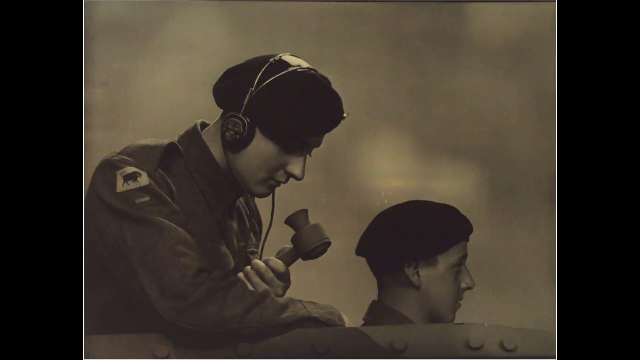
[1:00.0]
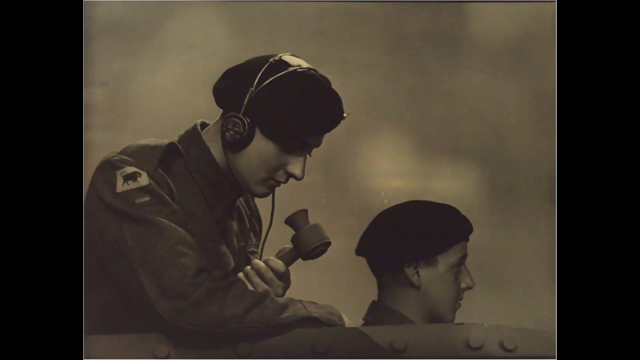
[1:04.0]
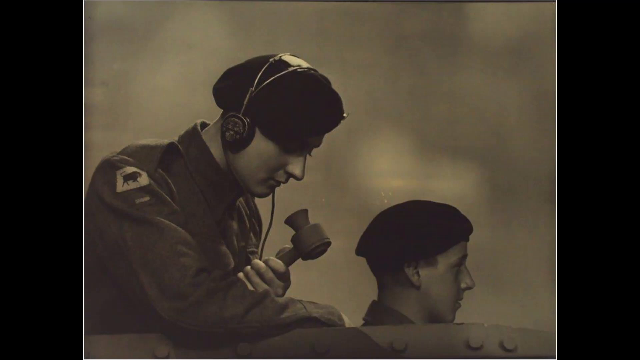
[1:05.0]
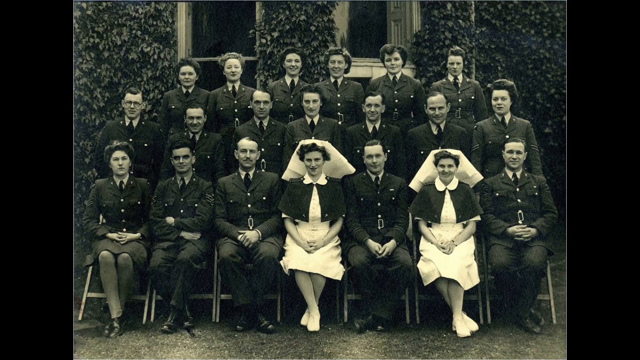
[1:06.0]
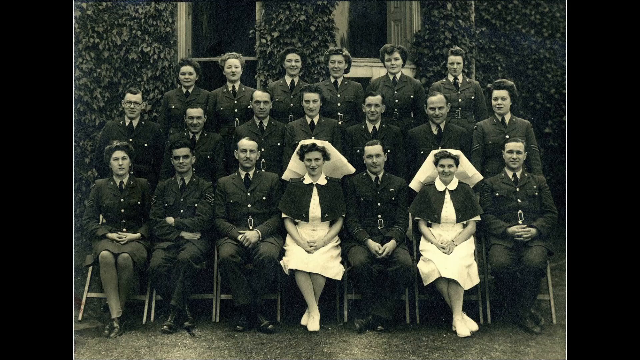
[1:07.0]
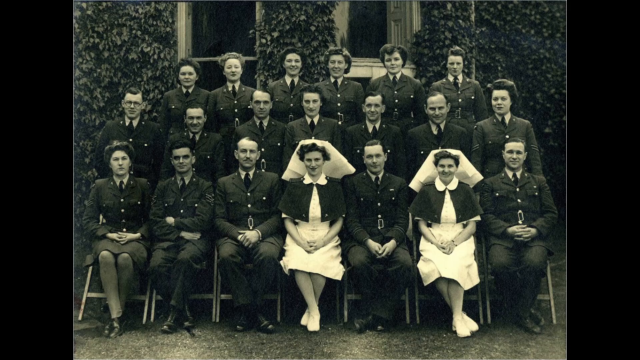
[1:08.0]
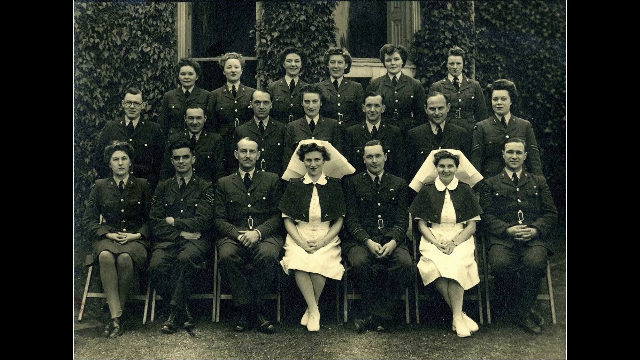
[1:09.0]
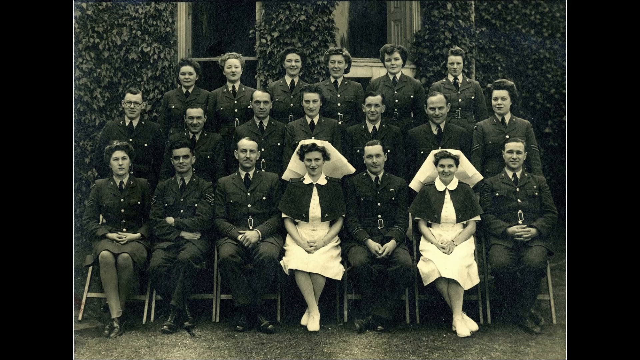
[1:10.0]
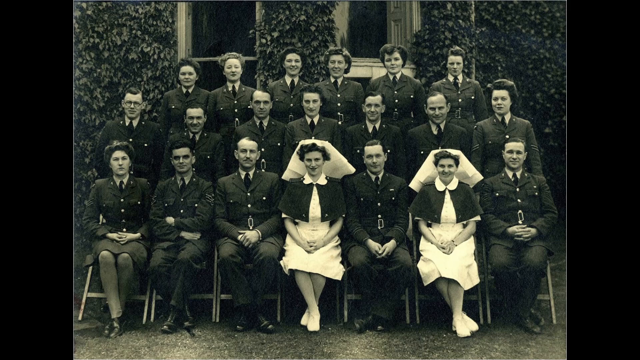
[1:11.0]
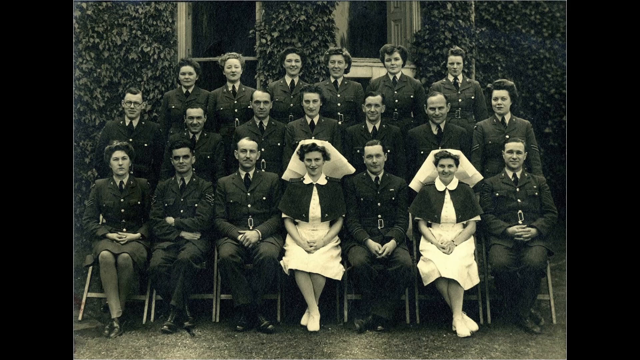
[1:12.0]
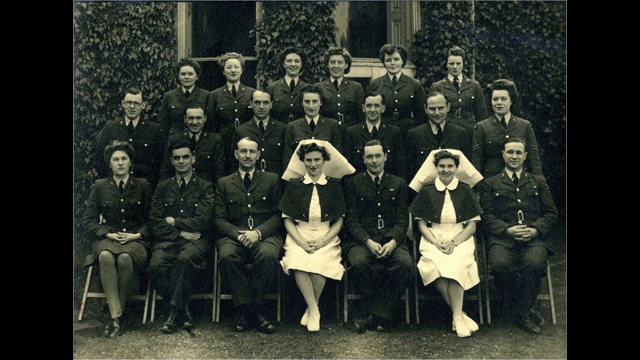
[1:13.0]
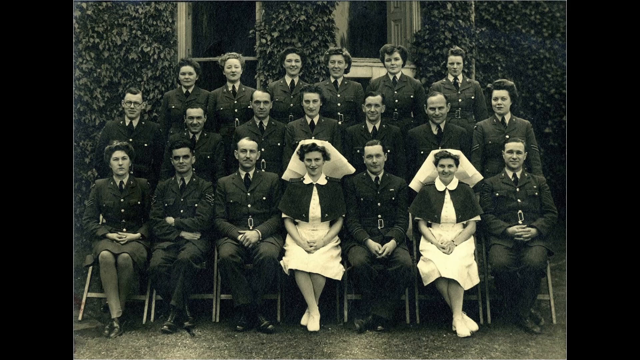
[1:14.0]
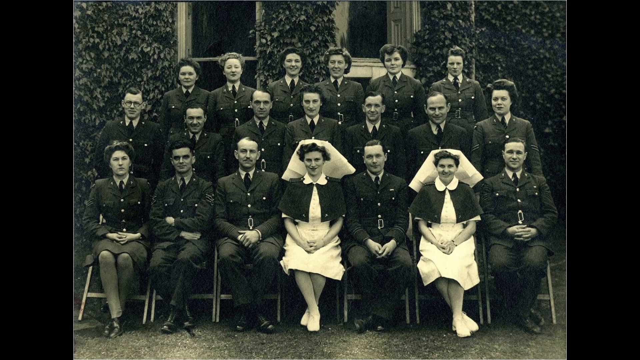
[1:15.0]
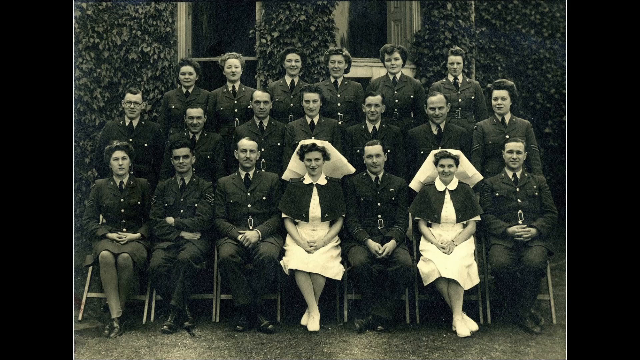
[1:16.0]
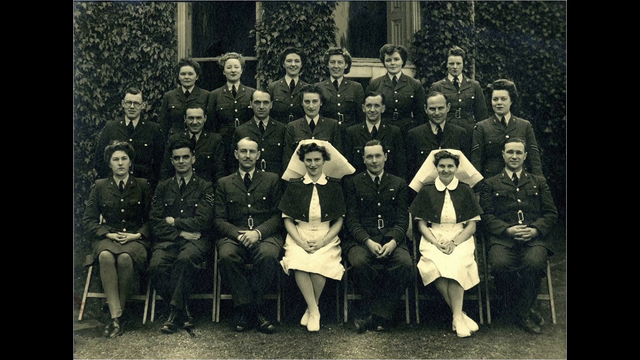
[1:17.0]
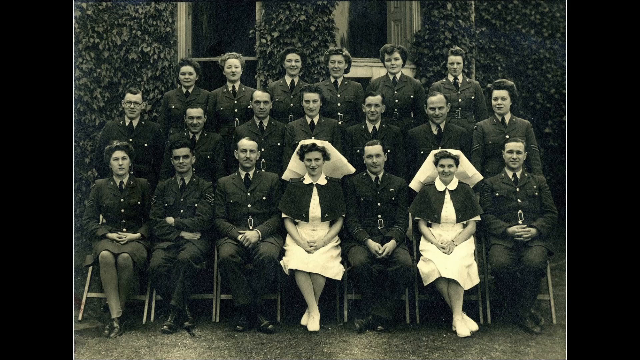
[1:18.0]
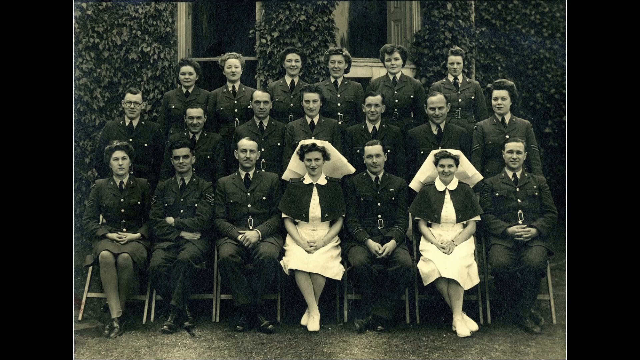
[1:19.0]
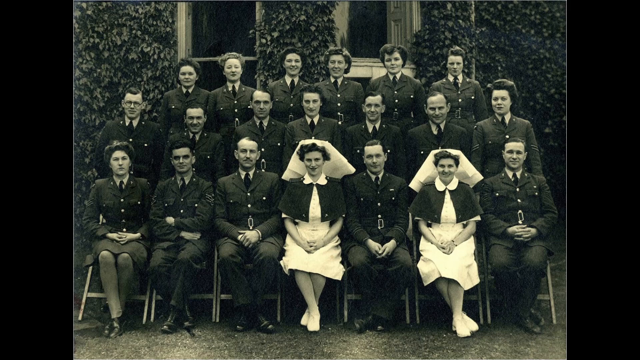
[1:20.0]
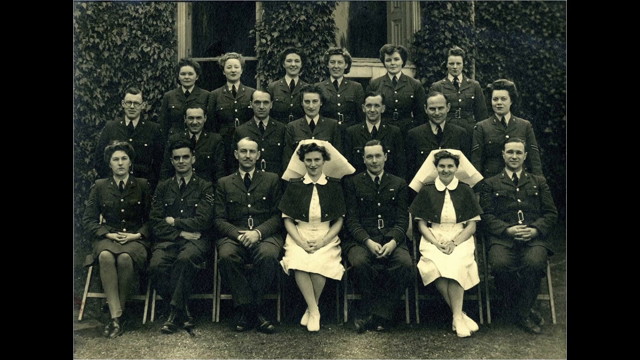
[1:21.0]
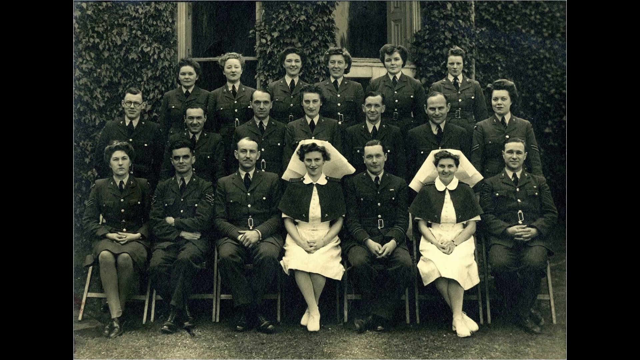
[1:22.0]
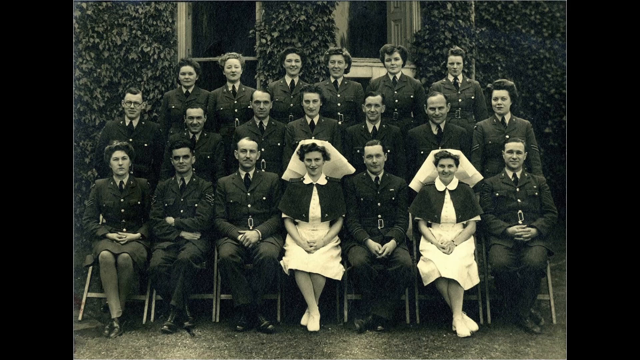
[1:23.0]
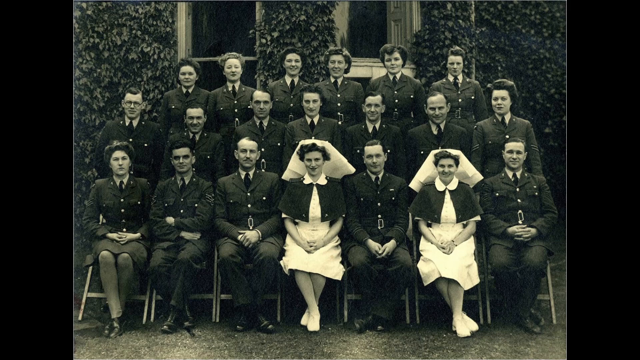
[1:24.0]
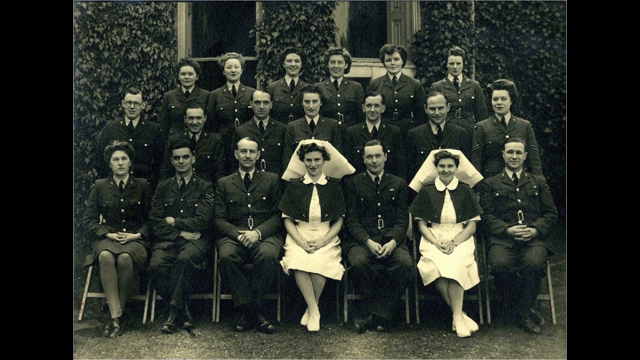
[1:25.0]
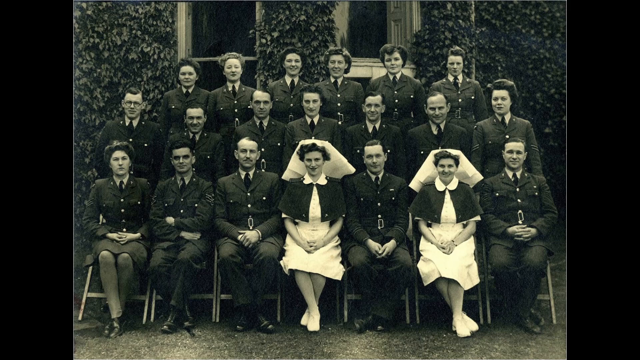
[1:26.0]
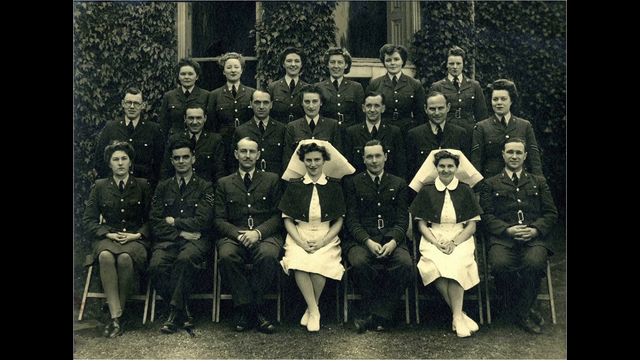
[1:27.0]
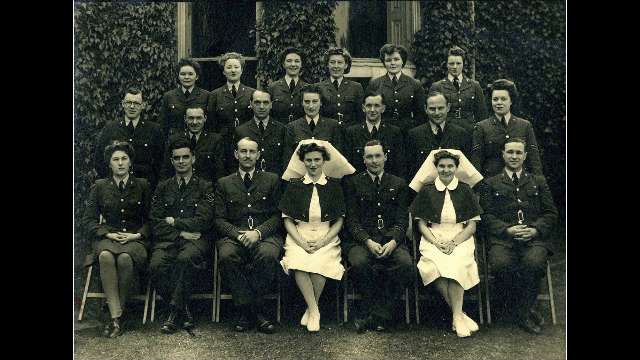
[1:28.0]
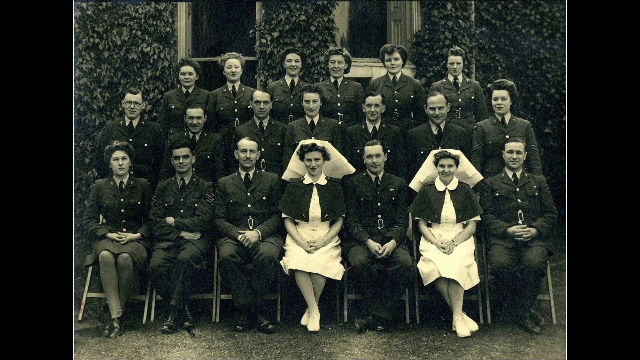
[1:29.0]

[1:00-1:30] An old black-and-white photograph shows two young men, around 18 to 20 years old. One of them wears a headset with a microphone to speak into and is looking down. Both are in uniform and wear beret-like hats. There is no writing on the photograph. On the young man's right shoulder is a patch that looks like a bull or a cow, though it is hard to see. Next comes what is probably a graduating class of men and women in uniform. The men wear ties and pants, and many of the women wear ties and skirts. Two women wear a white headdress, a shawl and a white uniform, suggesting they may be nurses, so the group might be doctors and nurses.